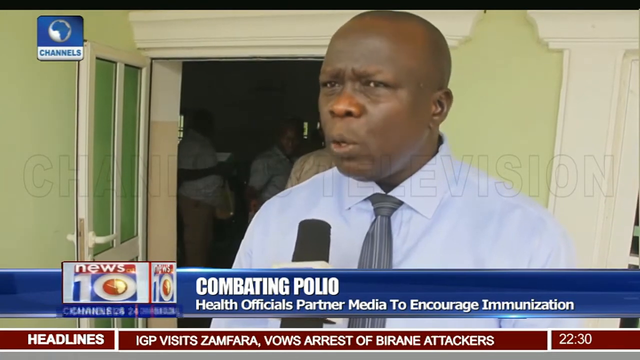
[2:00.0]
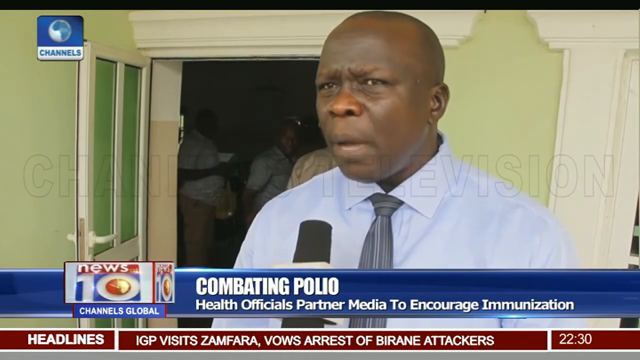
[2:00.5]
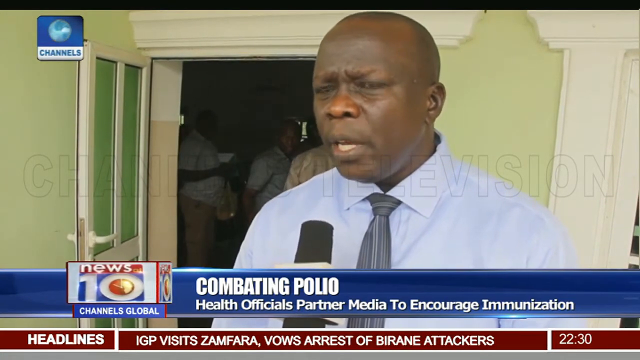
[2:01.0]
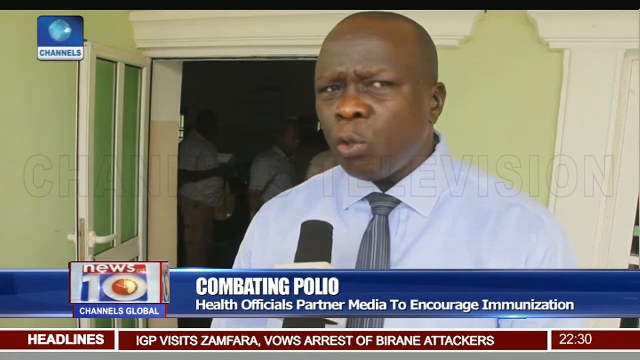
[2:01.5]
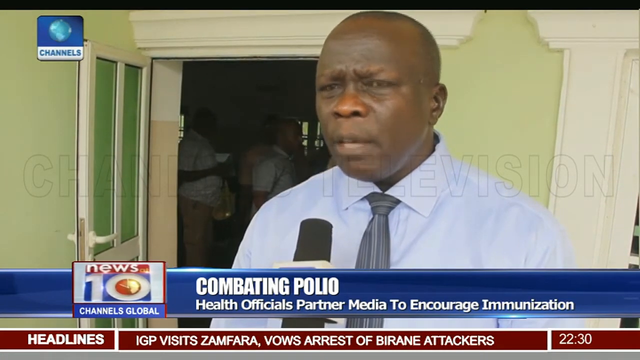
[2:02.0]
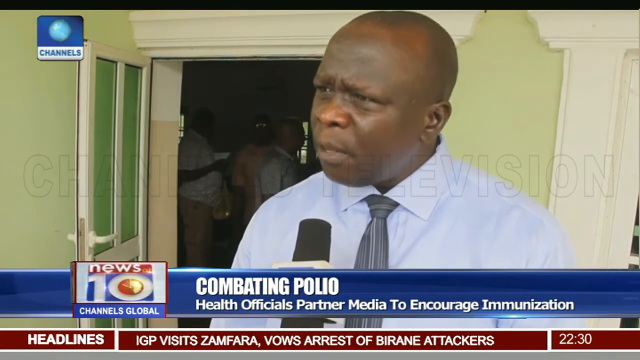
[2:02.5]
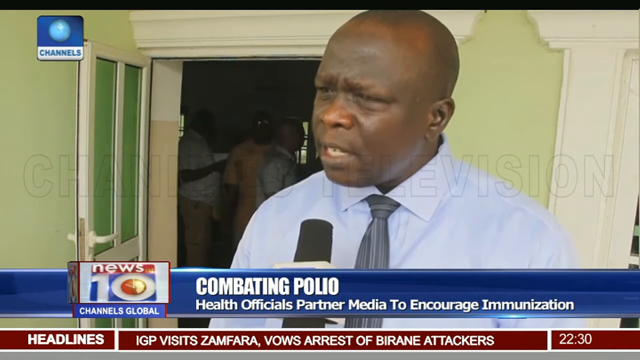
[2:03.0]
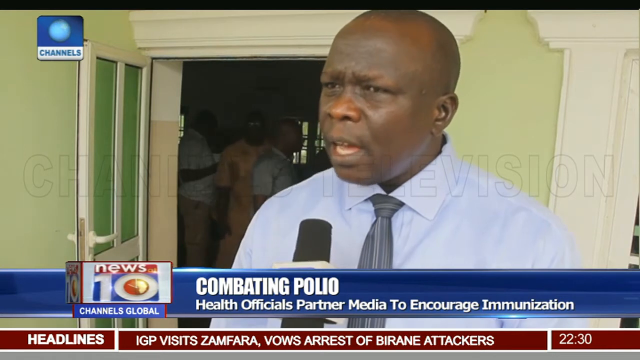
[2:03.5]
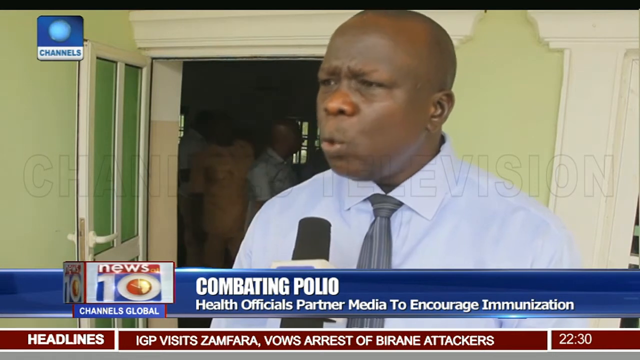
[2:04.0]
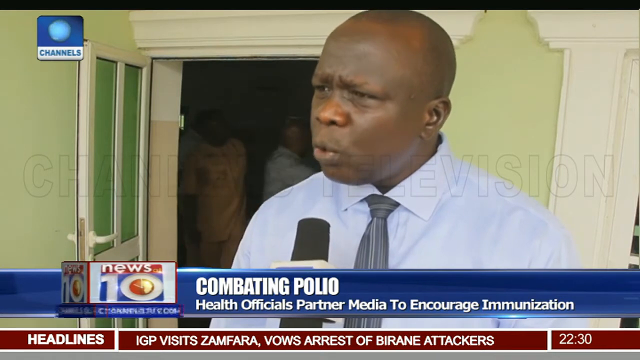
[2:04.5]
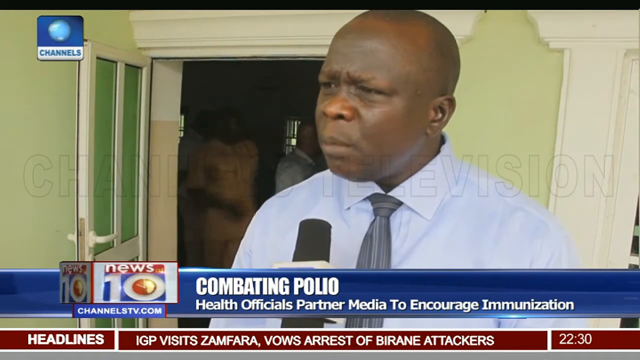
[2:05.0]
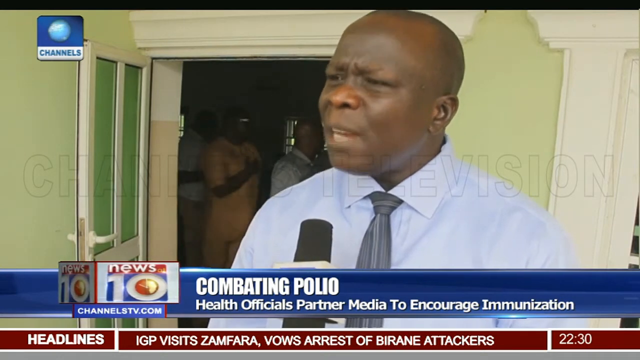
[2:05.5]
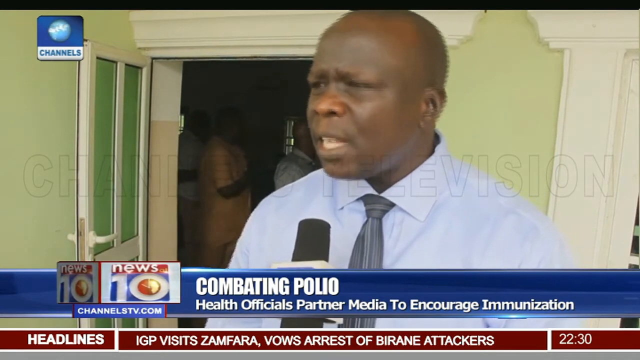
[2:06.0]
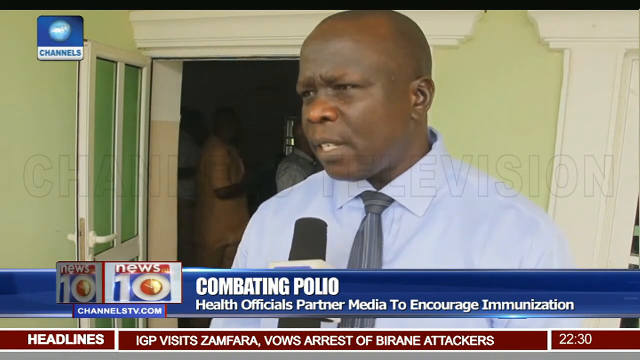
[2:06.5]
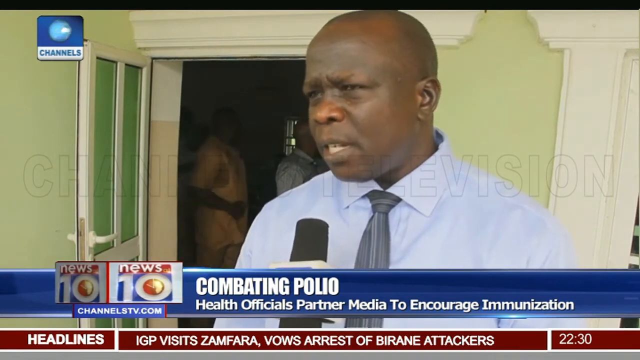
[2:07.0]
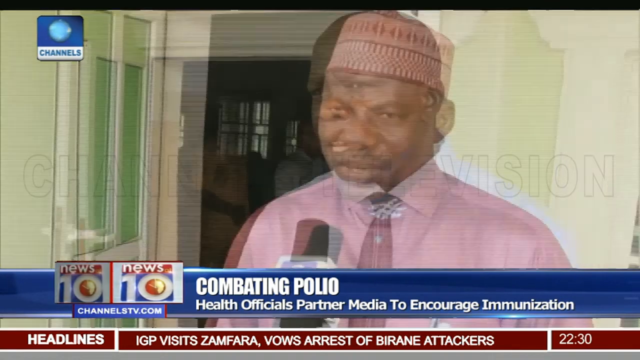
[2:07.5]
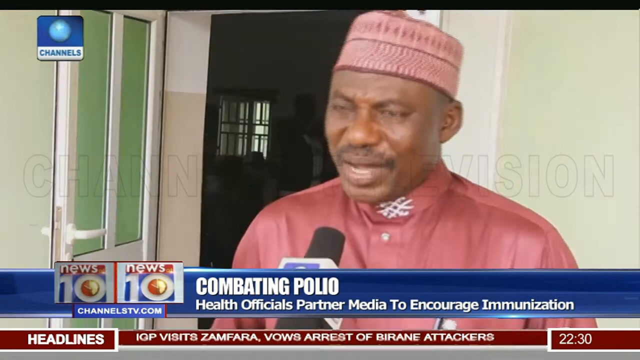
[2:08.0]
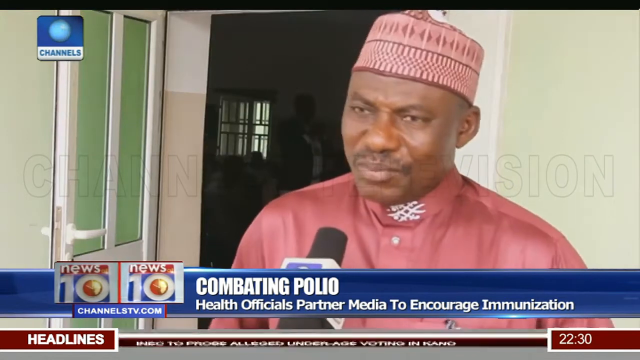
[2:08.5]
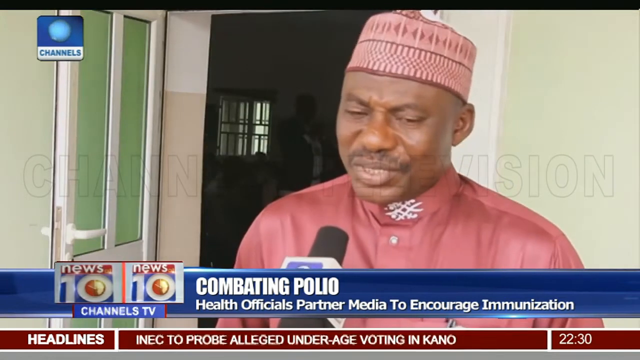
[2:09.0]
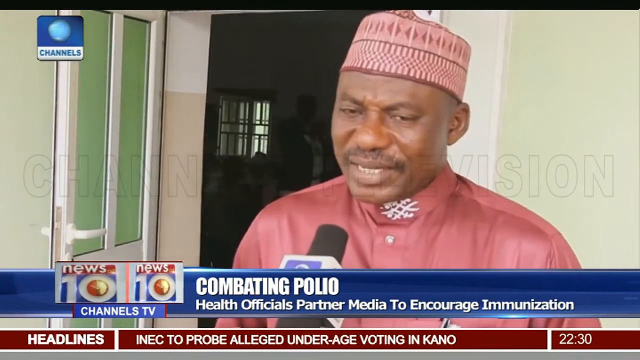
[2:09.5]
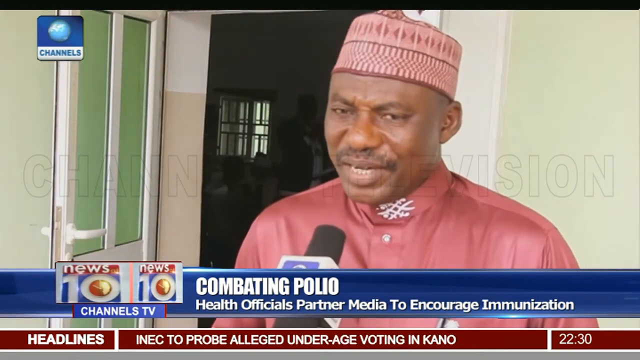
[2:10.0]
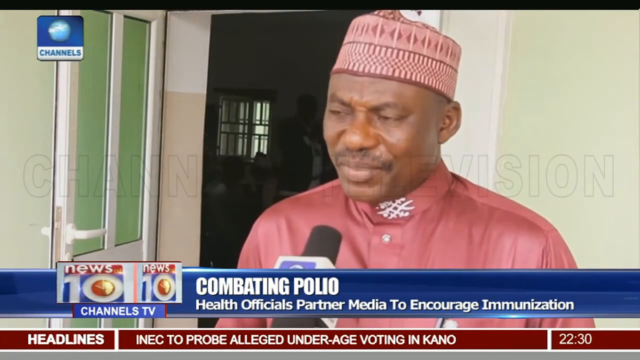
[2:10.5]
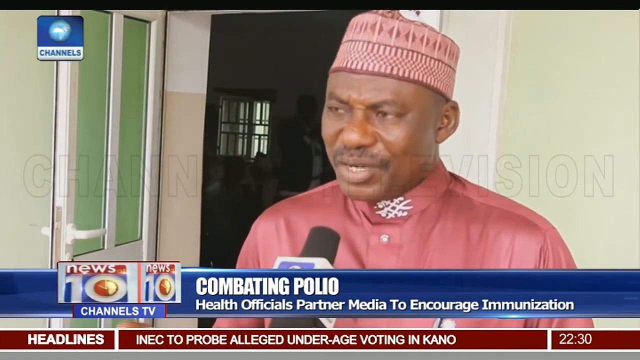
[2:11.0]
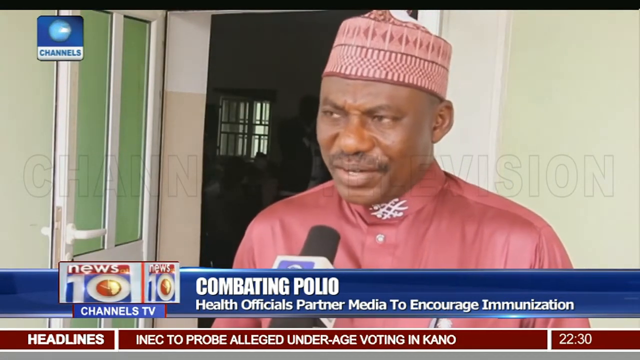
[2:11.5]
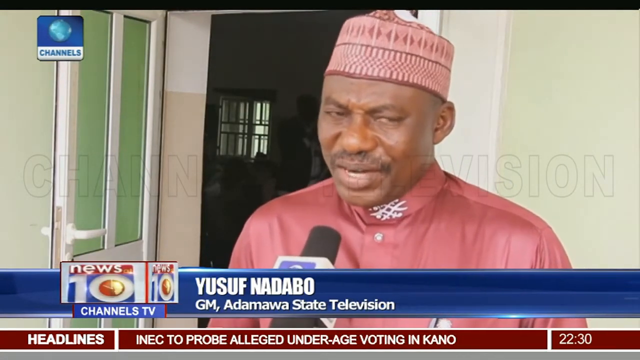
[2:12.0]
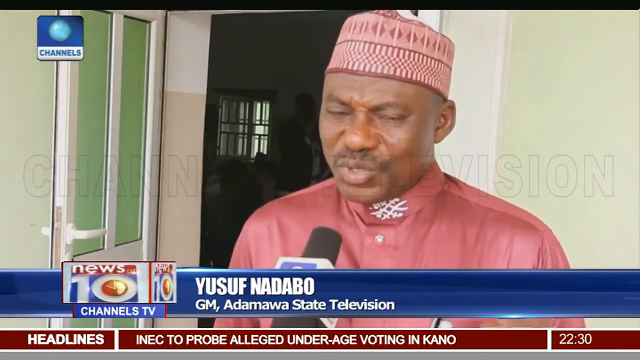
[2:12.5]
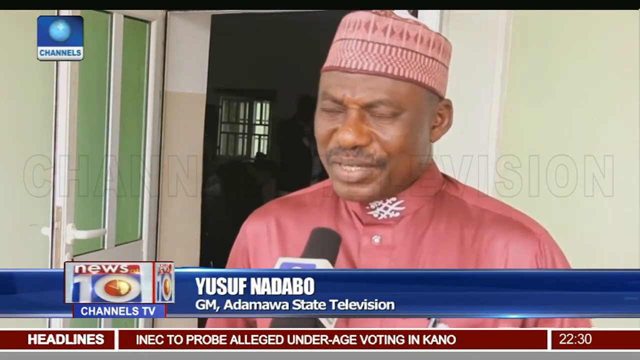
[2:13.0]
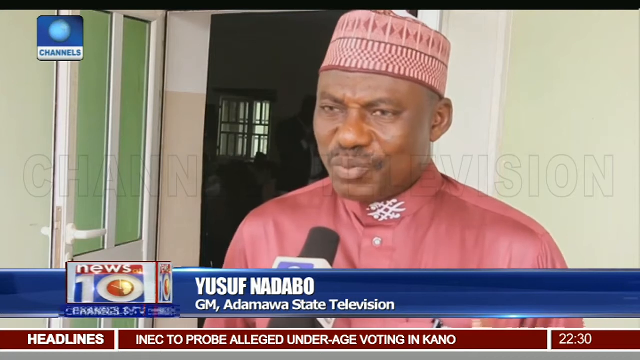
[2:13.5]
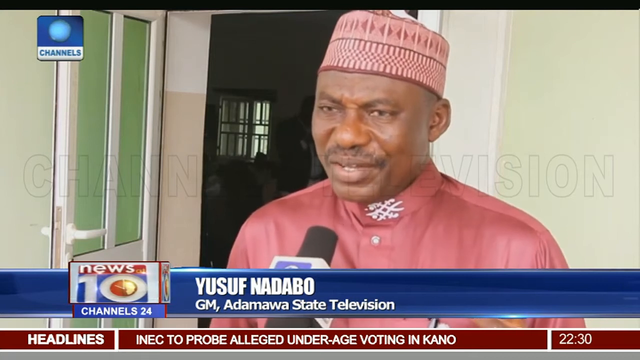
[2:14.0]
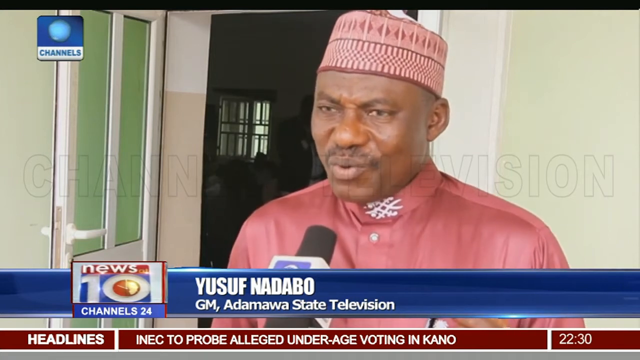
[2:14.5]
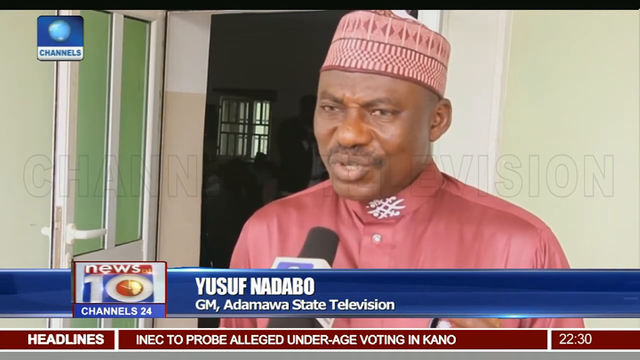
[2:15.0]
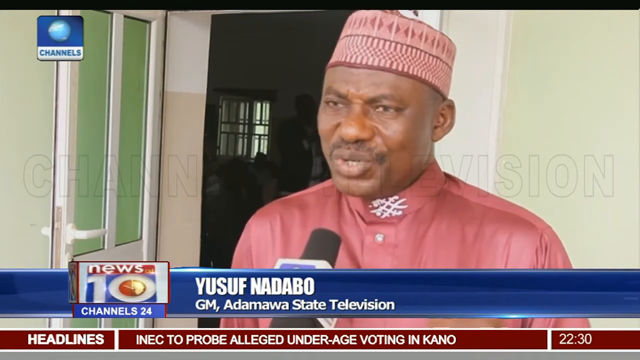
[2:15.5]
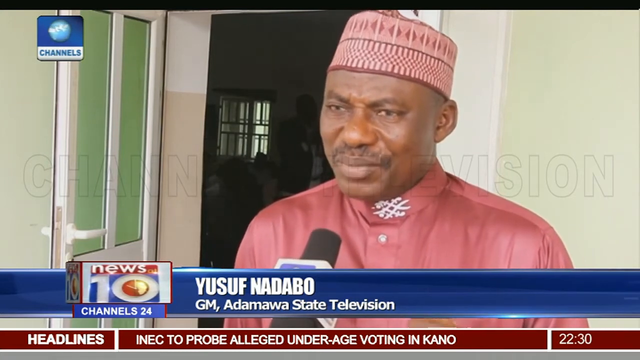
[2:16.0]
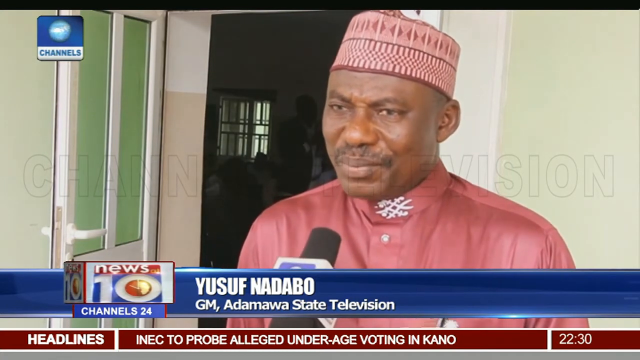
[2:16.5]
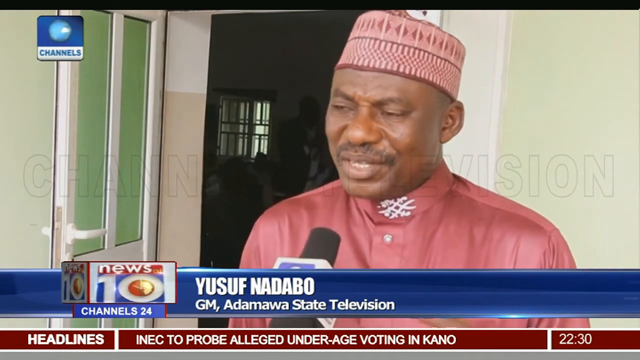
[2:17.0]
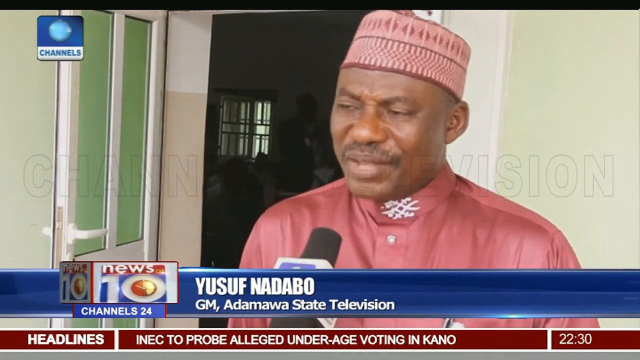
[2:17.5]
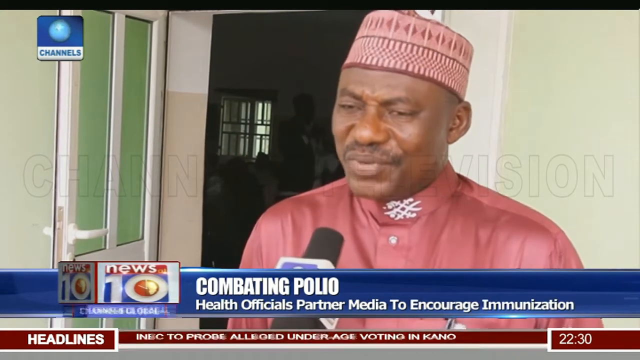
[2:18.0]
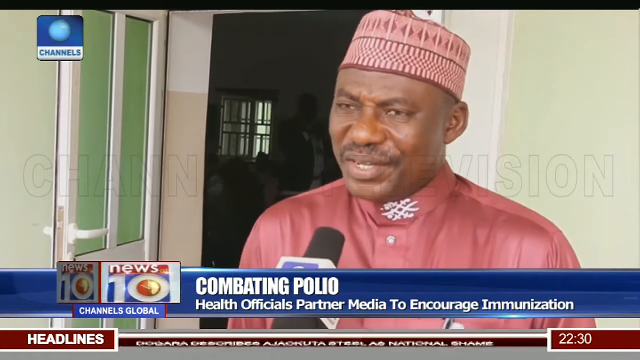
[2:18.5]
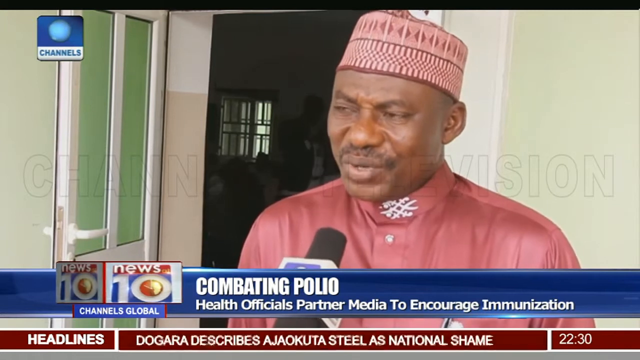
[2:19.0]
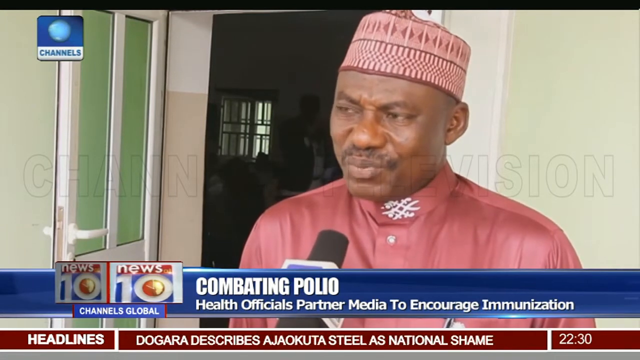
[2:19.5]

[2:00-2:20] Officials are asked questions by reporters about polio immunization. A man, Yusuf Natabu, head of state television, explains to a news reporter outside the conference room where the conference was held.